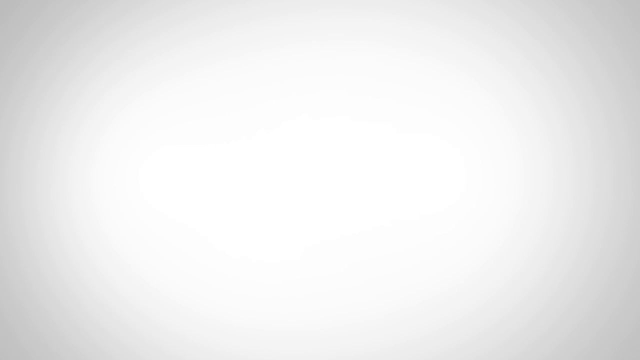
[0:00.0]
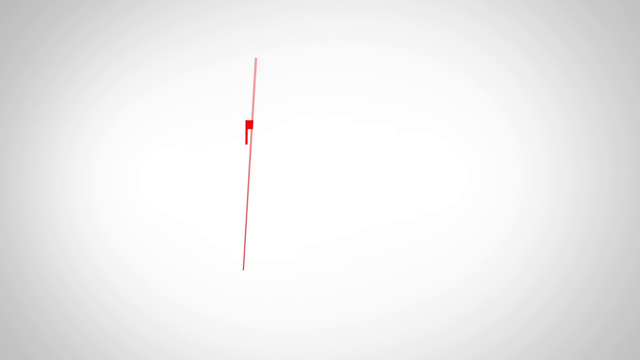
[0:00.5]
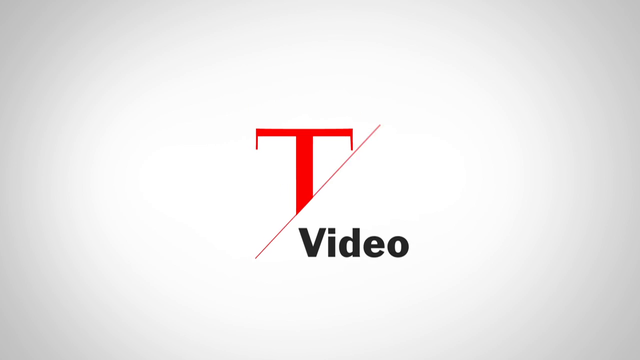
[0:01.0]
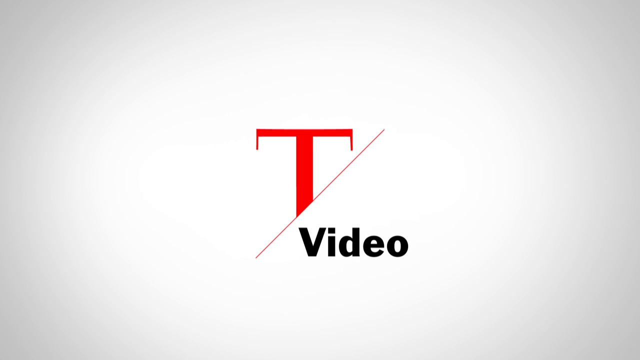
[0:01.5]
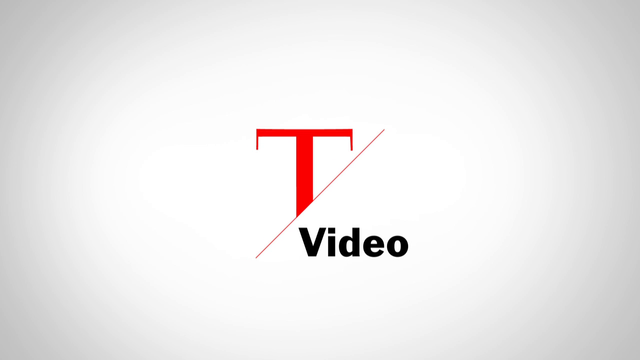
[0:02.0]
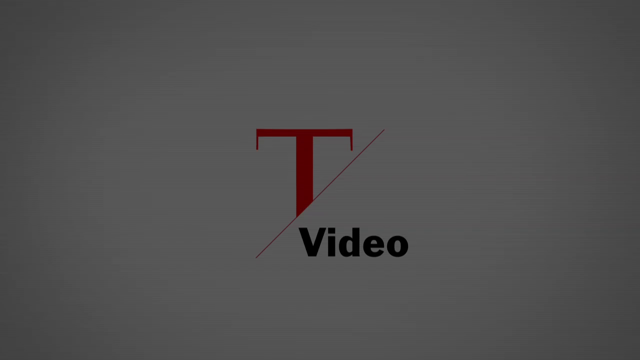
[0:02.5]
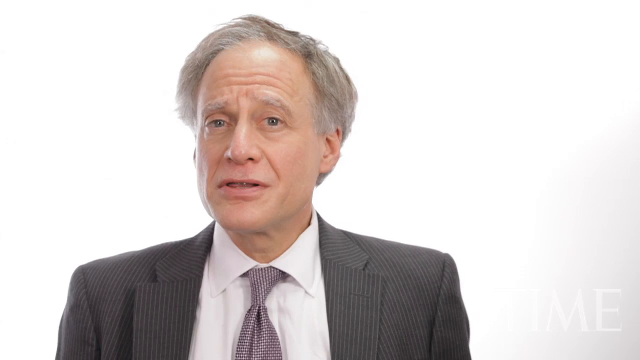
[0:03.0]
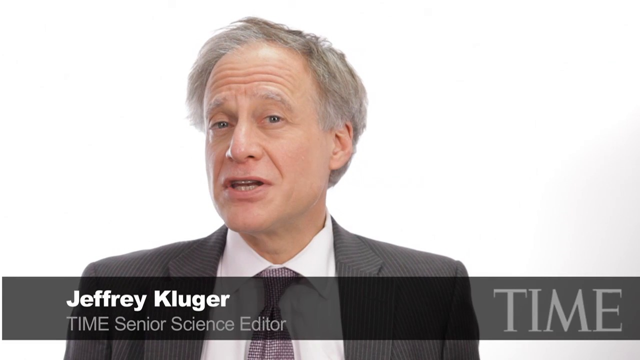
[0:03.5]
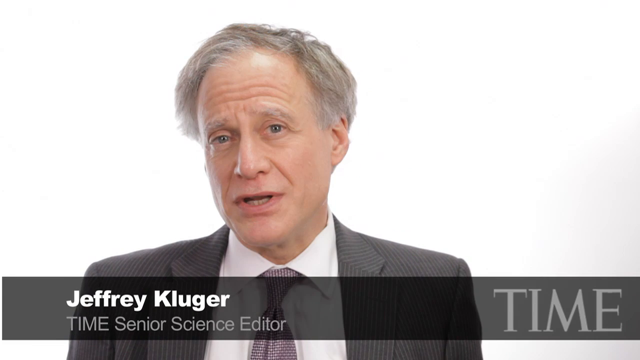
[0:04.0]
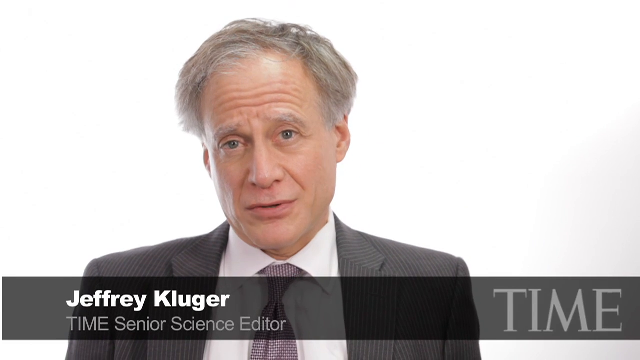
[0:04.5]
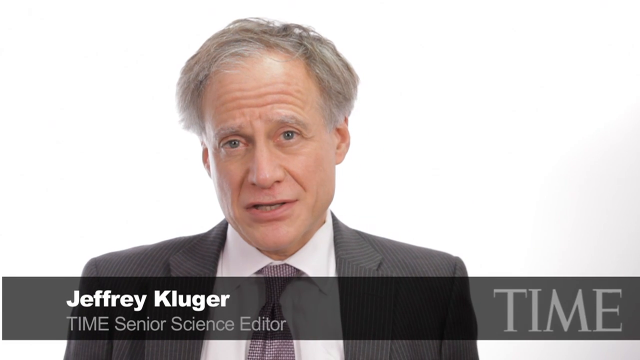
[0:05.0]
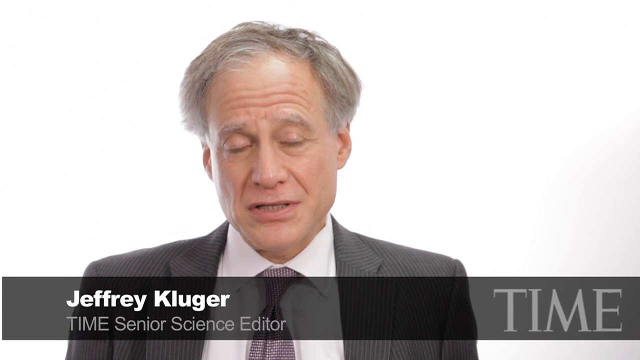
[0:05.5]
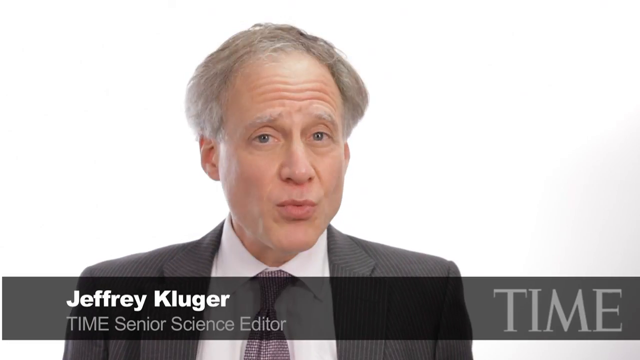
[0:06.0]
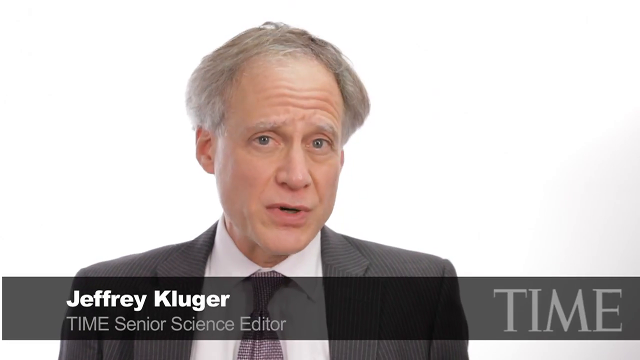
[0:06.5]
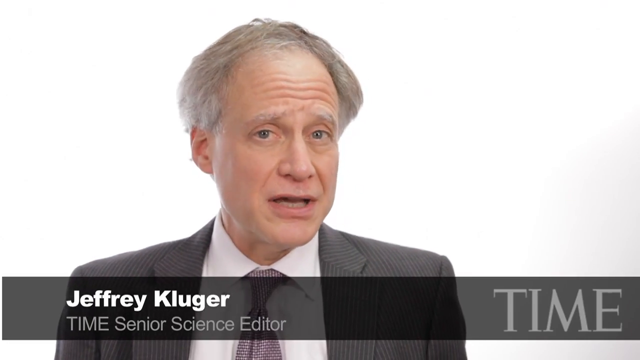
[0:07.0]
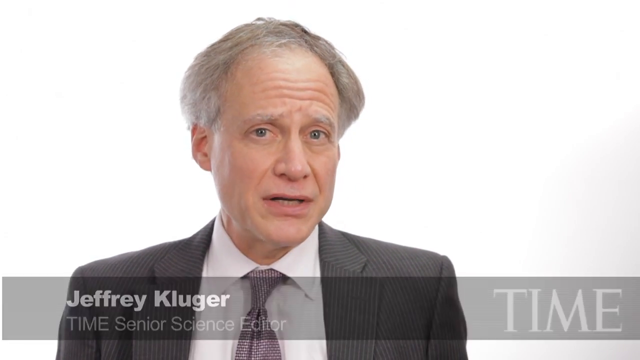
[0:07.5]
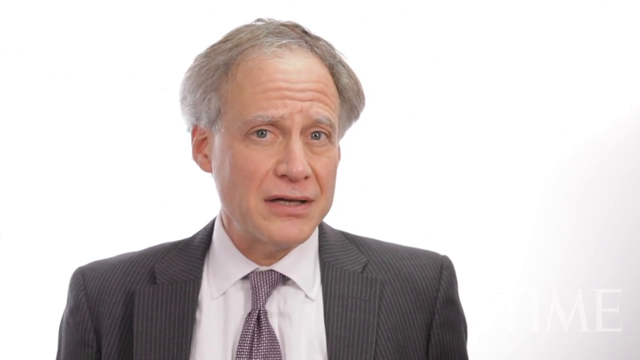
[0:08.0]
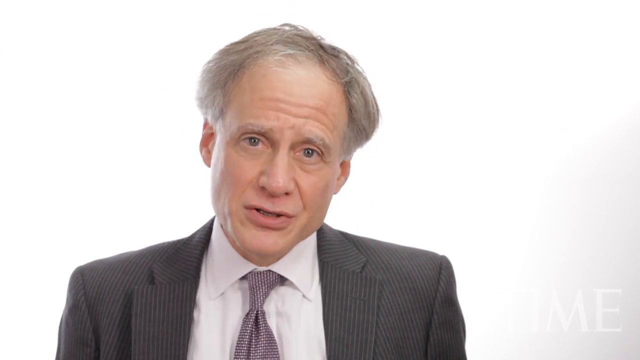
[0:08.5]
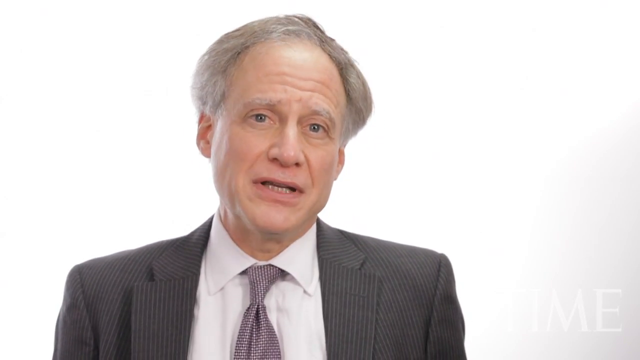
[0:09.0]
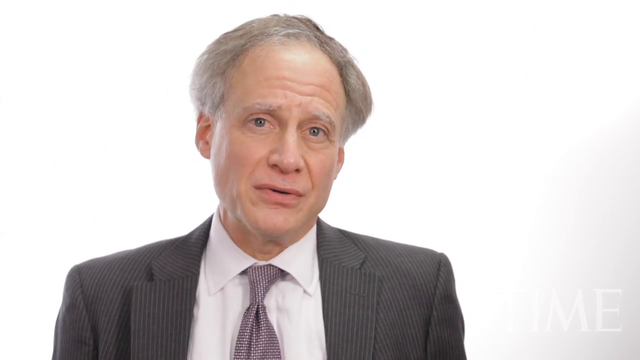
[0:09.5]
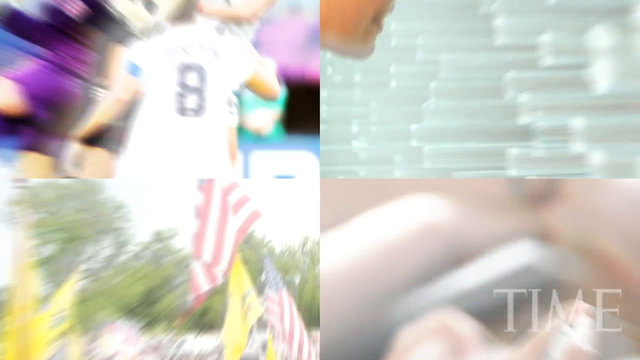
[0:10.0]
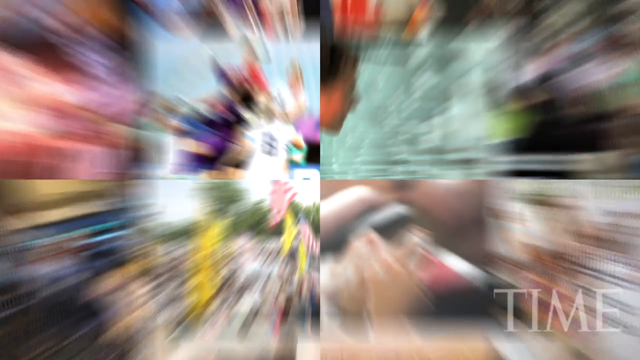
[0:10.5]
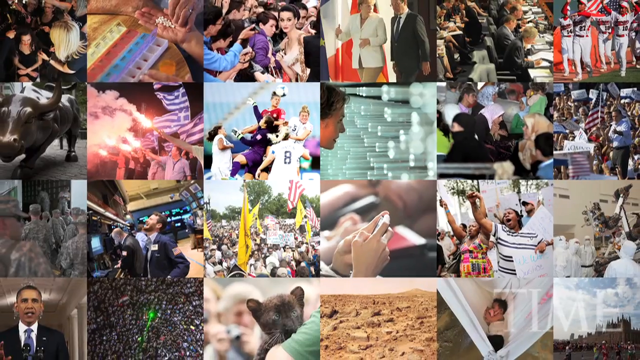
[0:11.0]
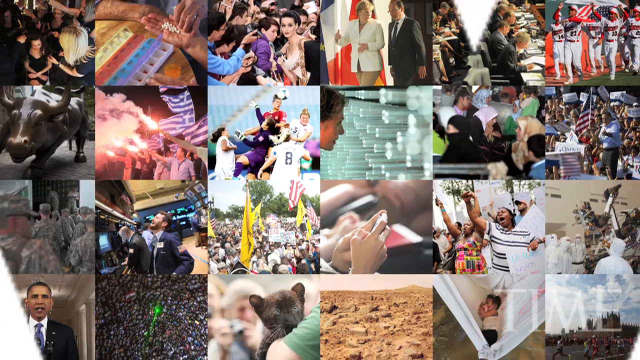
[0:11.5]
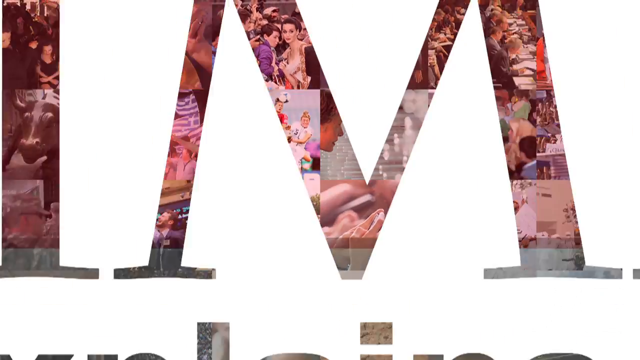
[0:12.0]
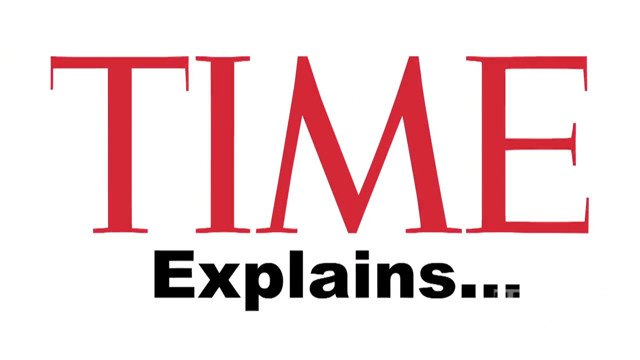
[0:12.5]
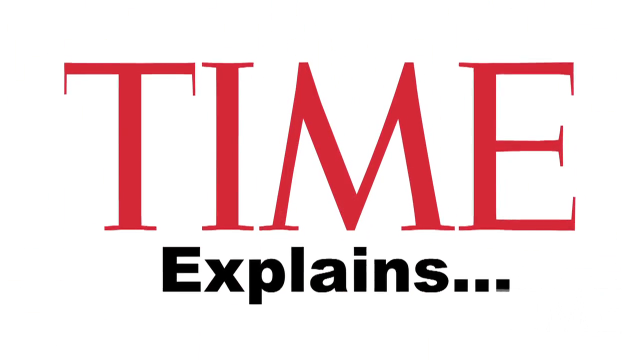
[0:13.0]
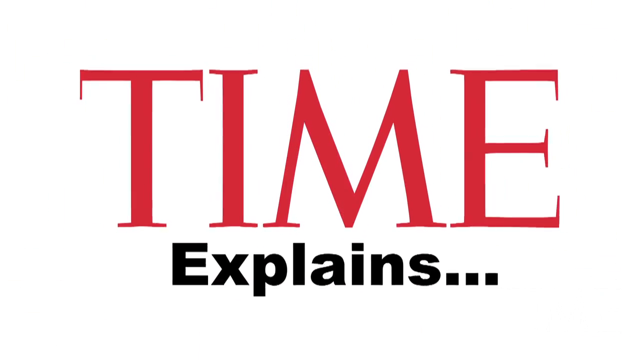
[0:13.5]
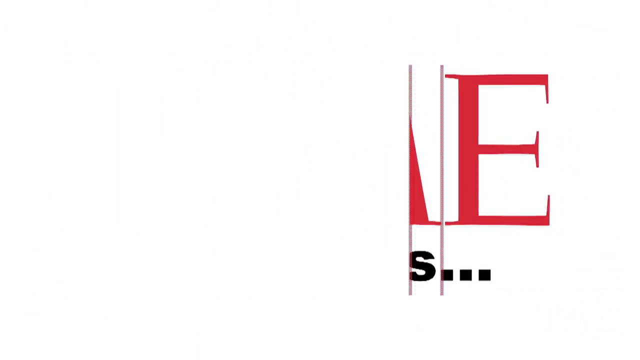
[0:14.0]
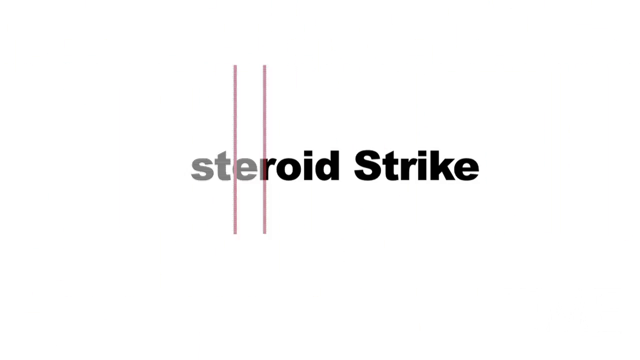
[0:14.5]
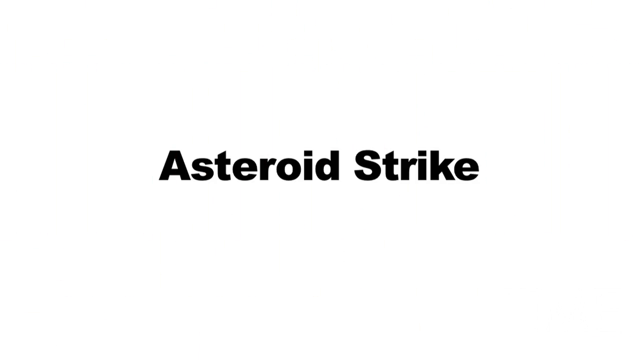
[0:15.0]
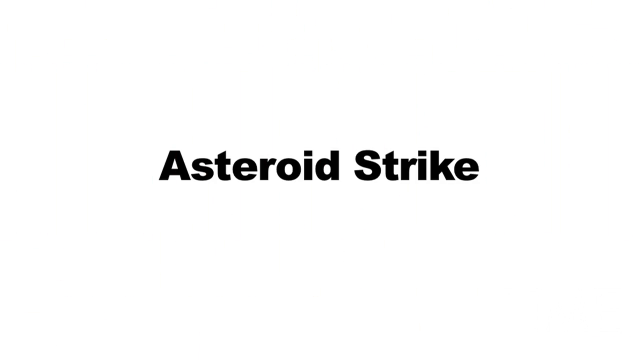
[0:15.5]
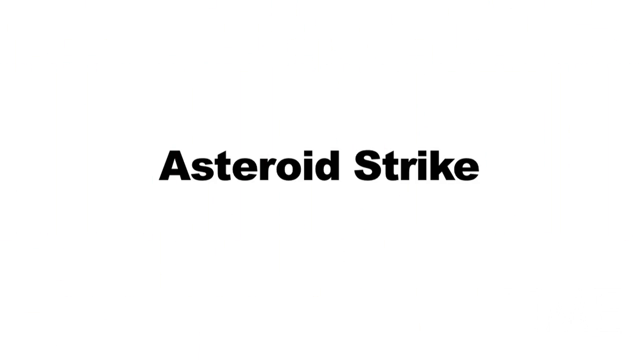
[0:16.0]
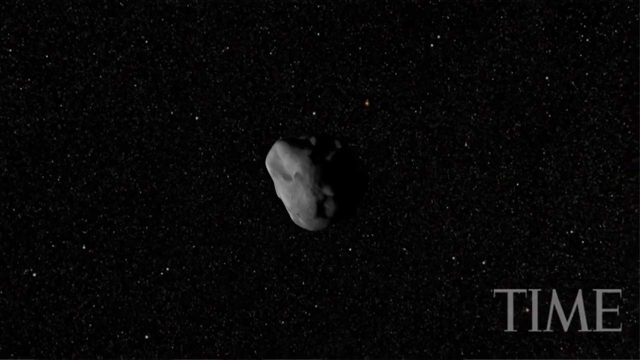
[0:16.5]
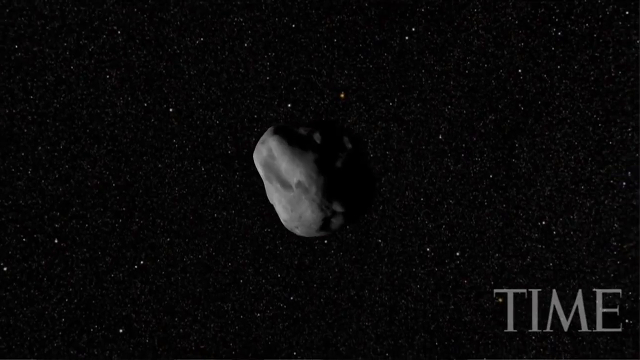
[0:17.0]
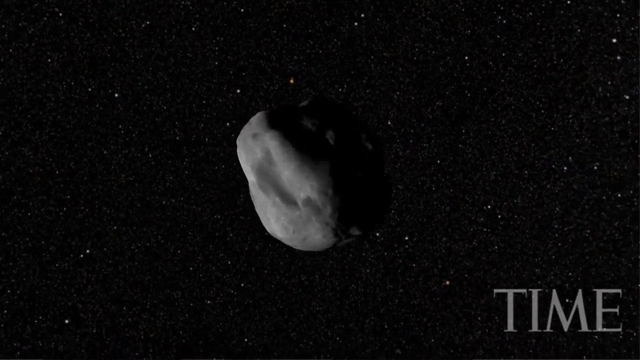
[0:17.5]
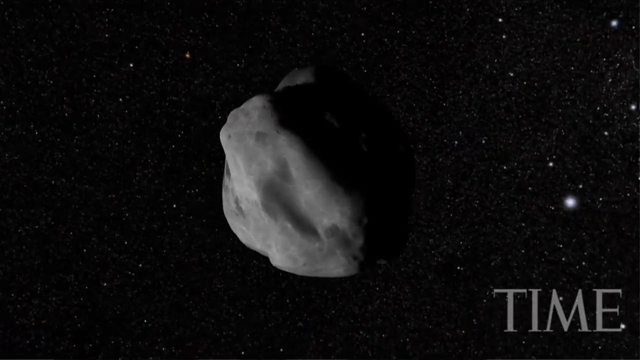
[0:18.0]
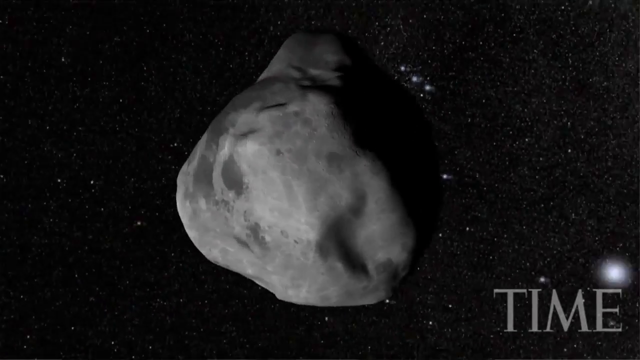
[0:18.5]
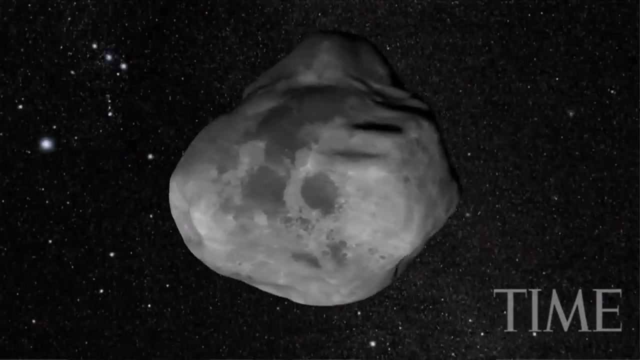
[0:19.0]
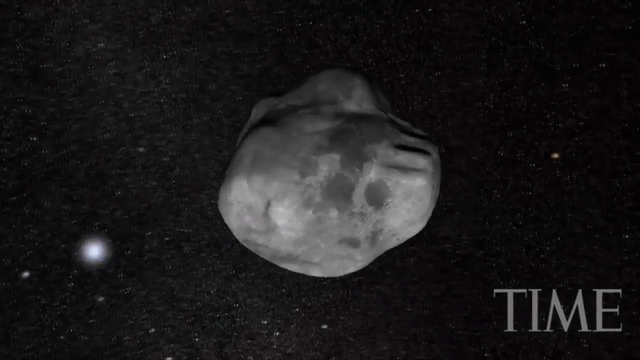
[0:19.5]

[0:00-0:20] The video opens with the title "T-Video." It then transitions to a man speaking, Jeffrey Kluger, the Time Senior Science Editor at Time Magazine. He talks on screen, moving his head around expressively. Next comes a scene that reads "Time explains asteroid strike." The video then shows an asteroid flying through space, moving from the left side of the screen toward the center and then off into the distance toward the right side. The asteroid is large and dark, in all different shades of gray from dark gray to light gray. In the distance behind it are millions of stars, some of them very large.